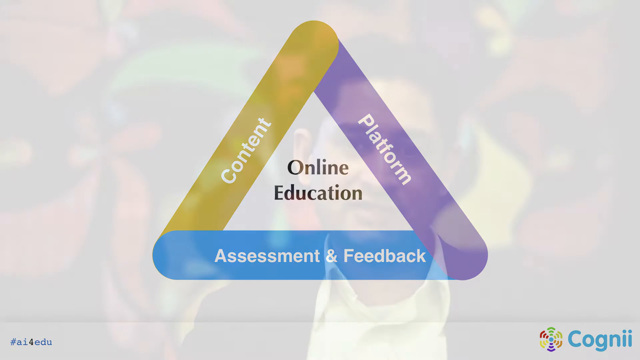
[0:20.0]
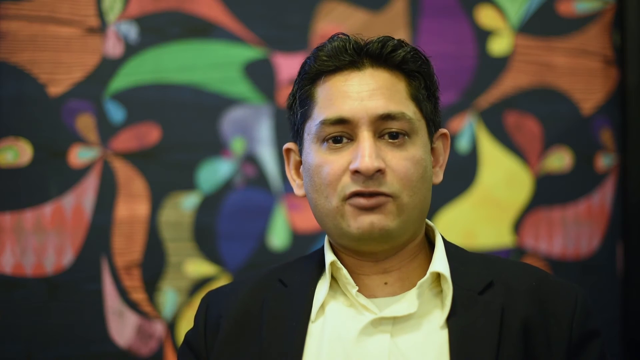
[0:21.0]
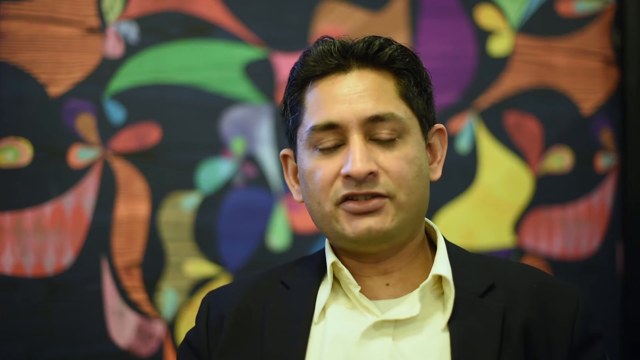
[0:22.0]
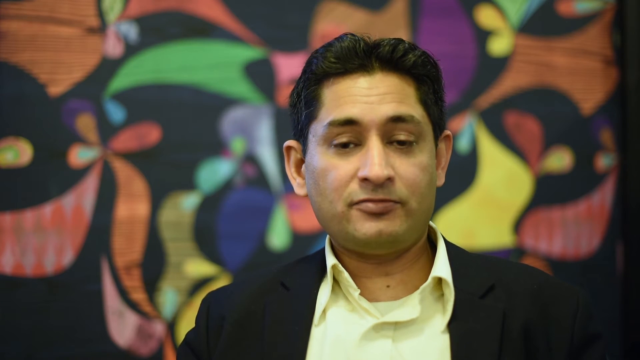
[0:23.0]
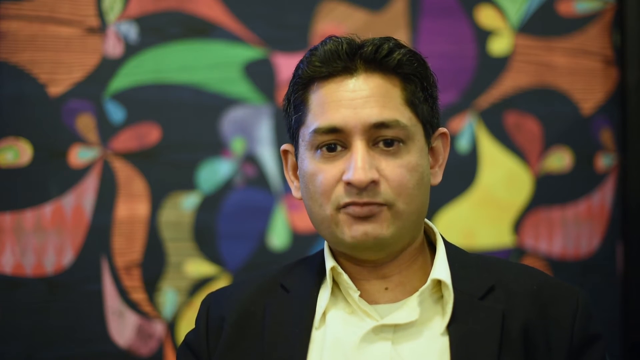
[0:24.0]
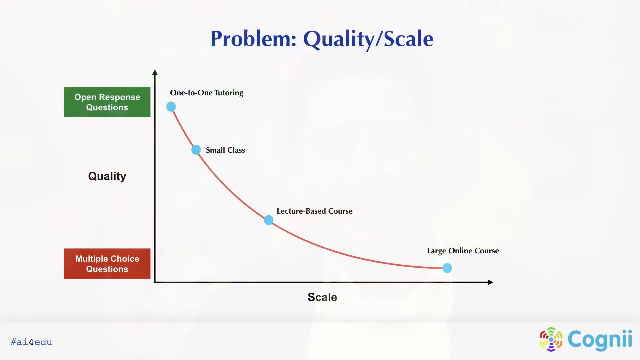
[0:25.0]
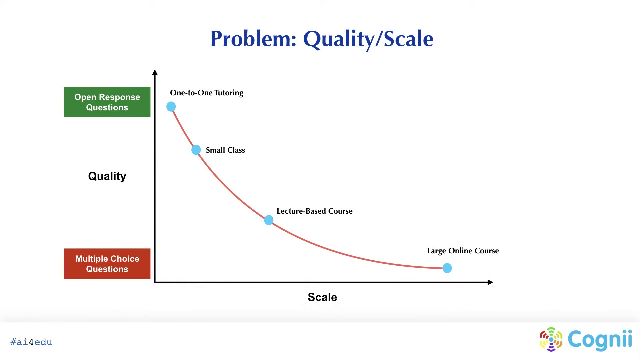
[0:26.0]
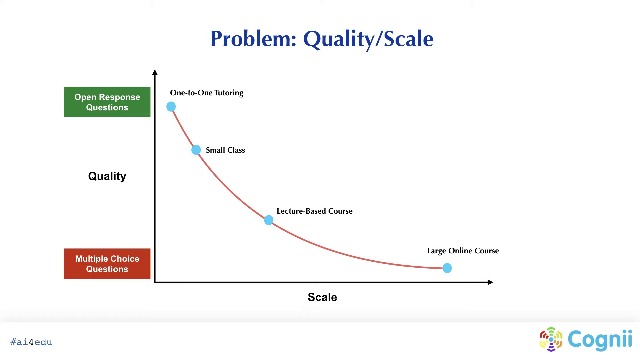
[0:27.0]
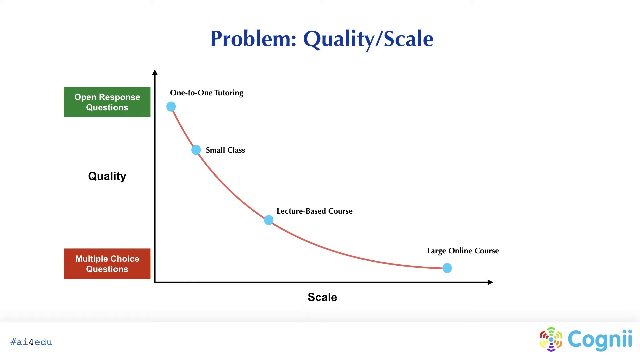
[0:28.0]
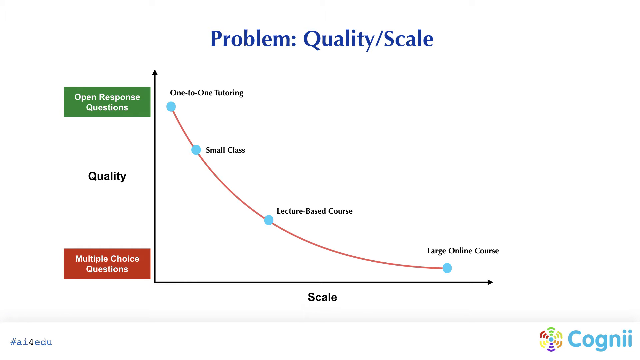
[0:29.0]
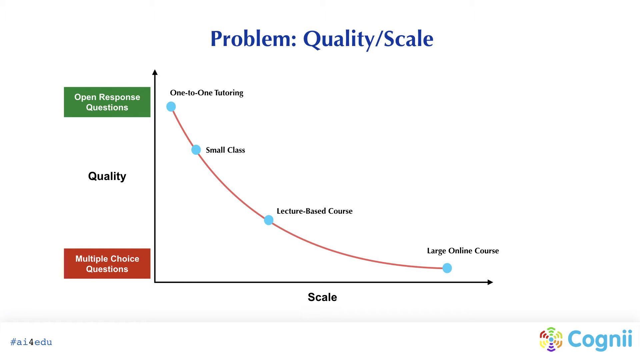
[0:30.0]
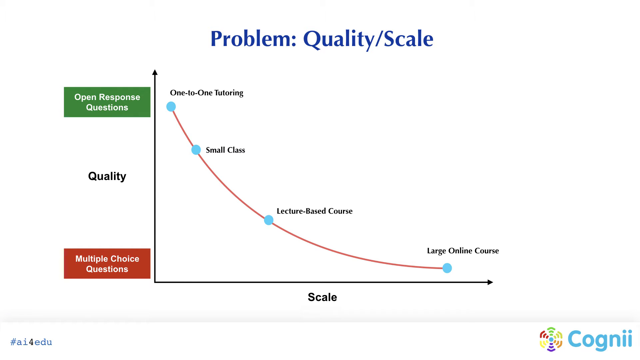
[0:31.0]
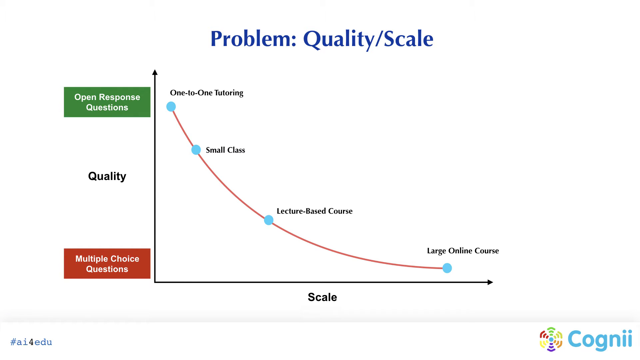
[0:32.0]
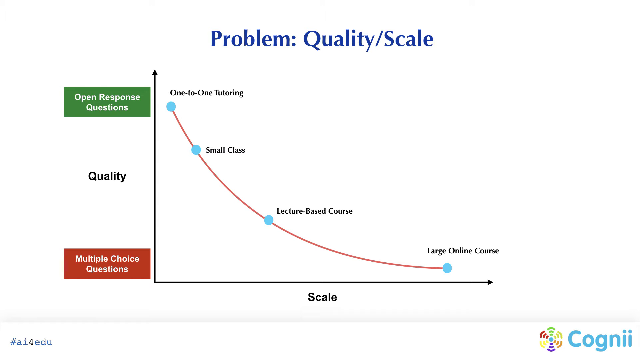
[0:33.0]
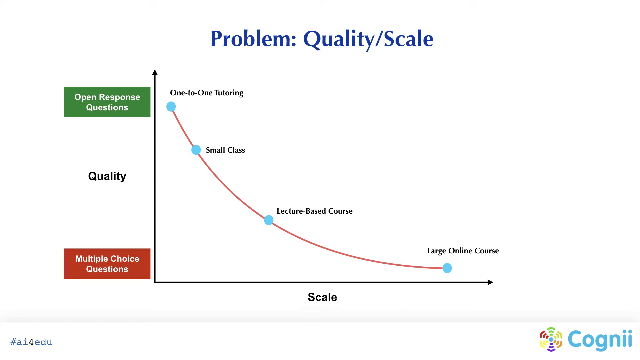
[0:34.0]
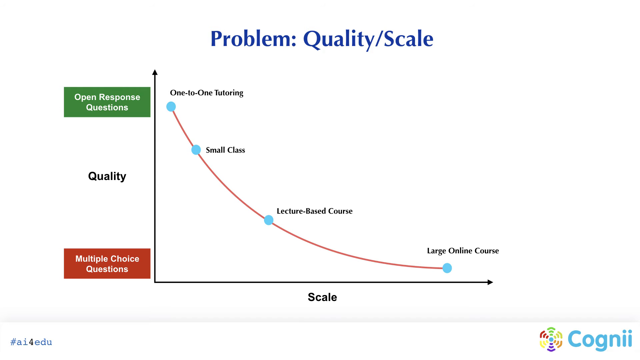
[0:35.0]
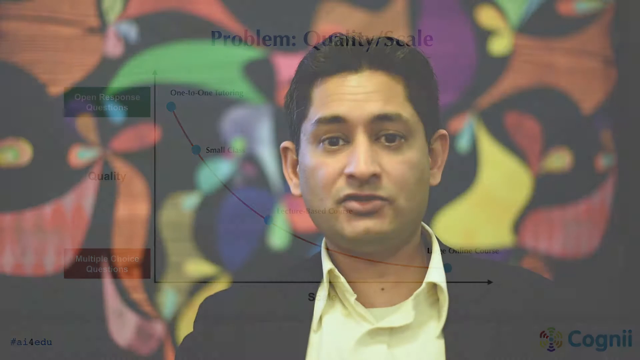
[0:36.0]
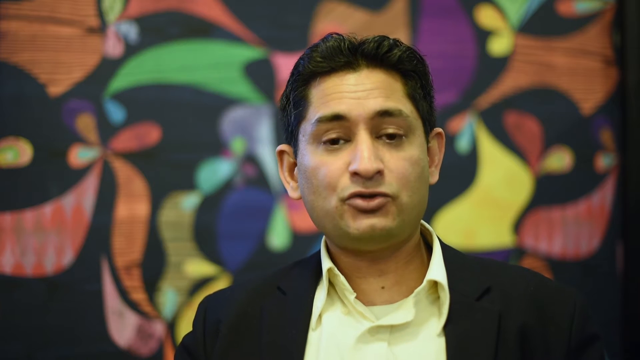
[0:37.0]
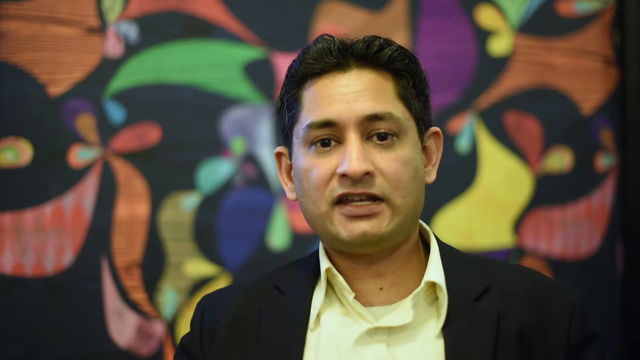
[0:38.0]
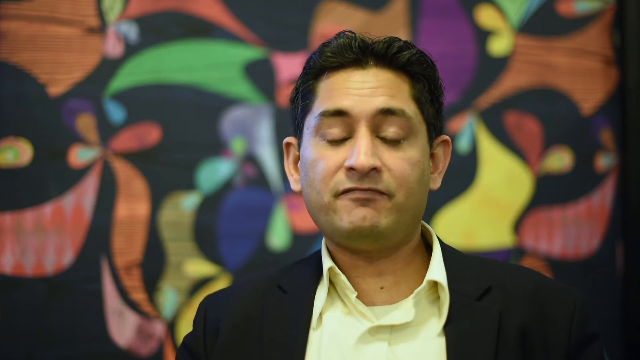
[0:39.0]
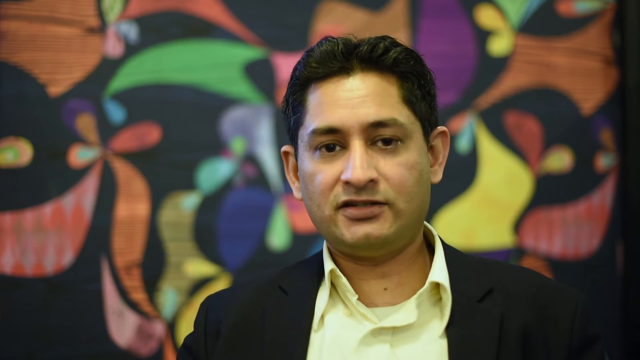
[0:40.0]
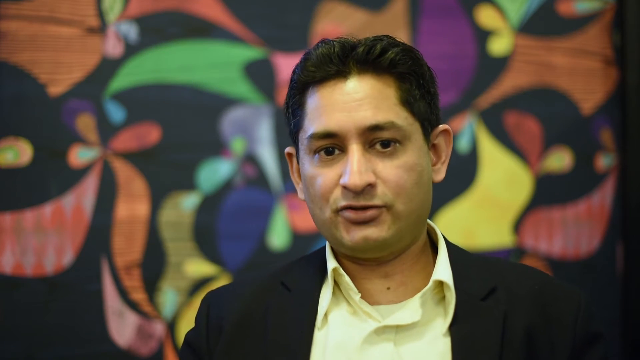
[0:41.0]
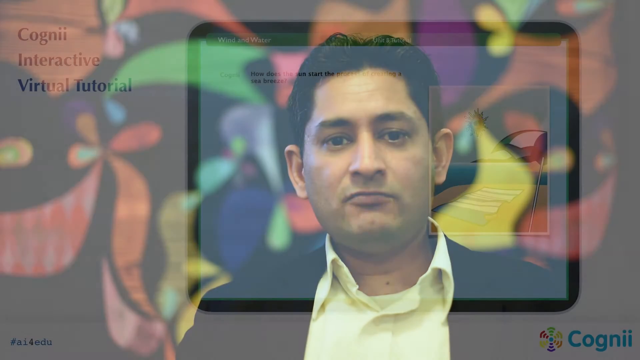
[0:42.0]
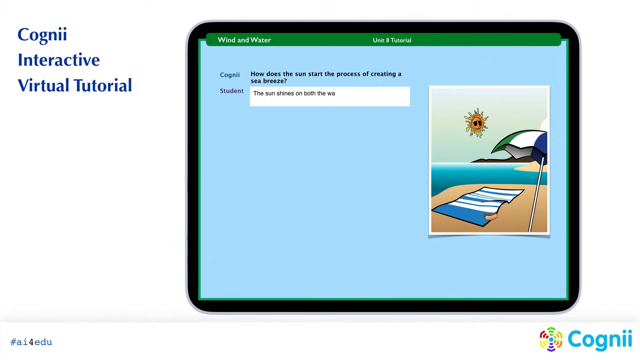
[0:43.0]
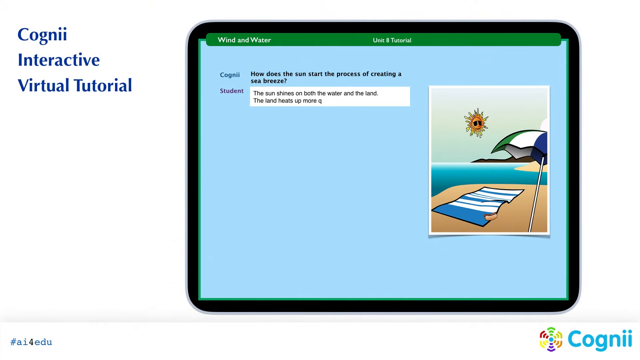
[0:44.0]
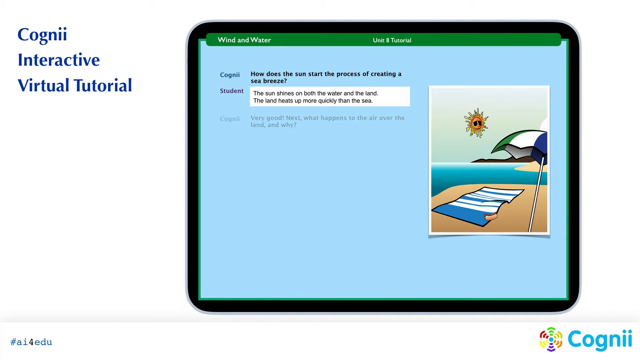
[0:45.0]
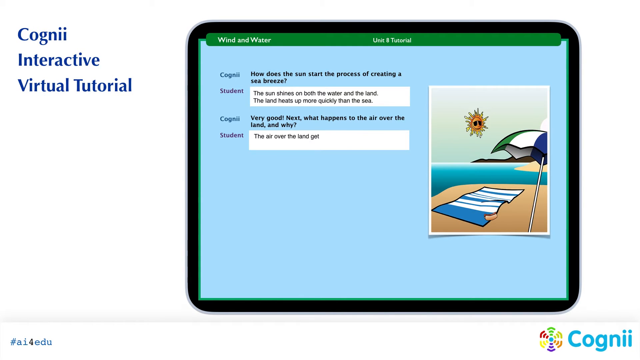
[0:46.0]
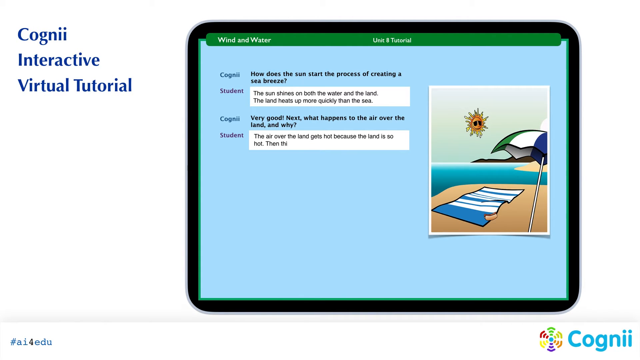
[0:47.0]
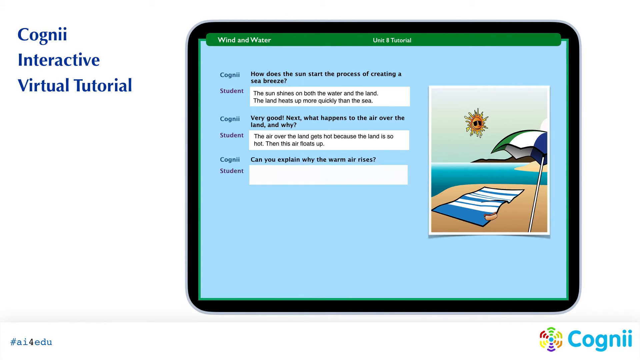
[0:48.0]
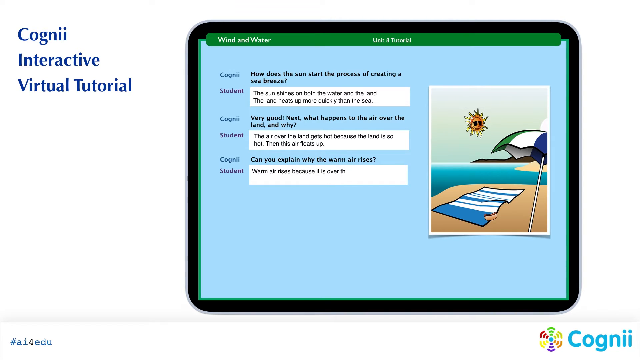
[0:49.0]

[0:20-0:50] The person continues, with items shown including problem quality skills, open response questions, one-to-one tutorial, small class, lectures, large online course scale and multiple choice question.